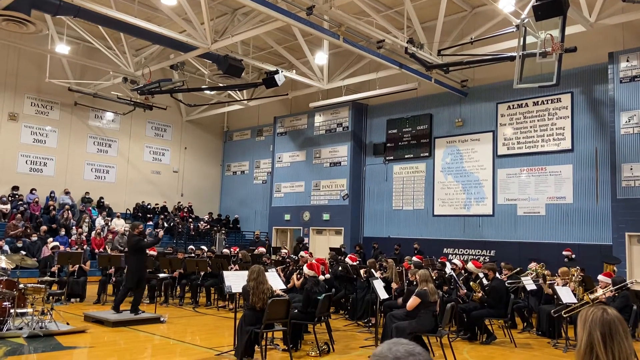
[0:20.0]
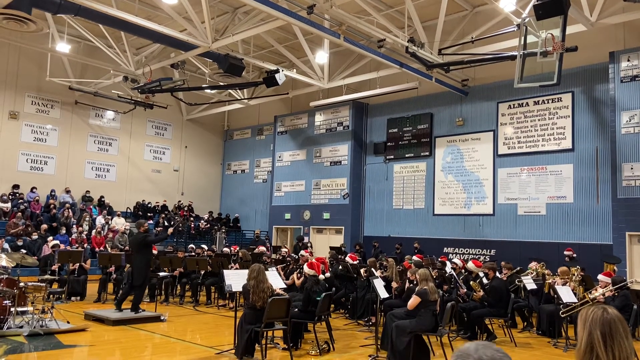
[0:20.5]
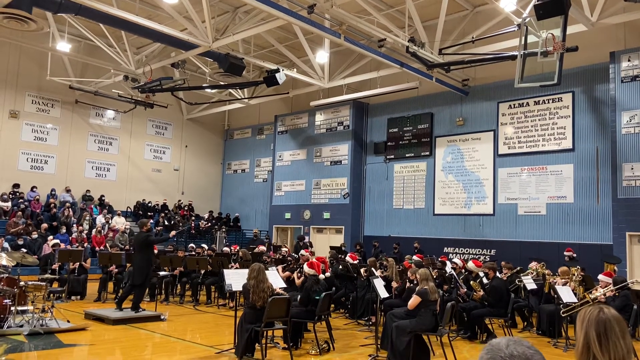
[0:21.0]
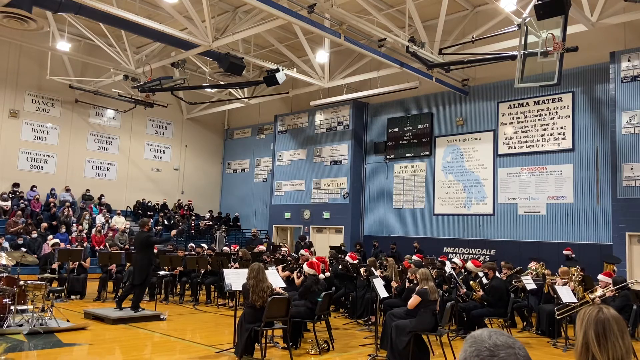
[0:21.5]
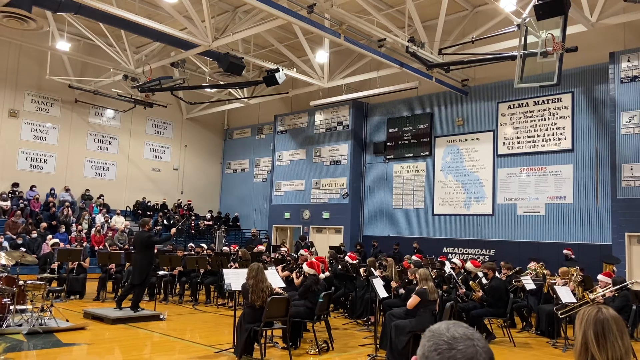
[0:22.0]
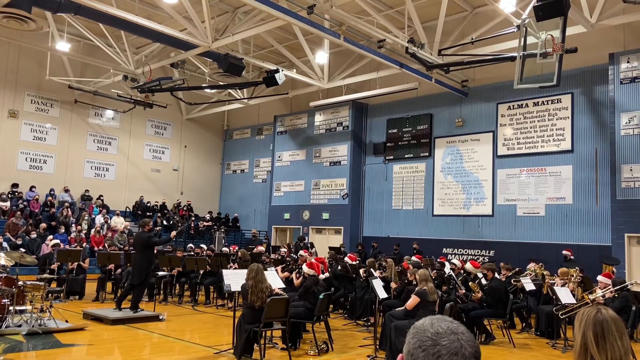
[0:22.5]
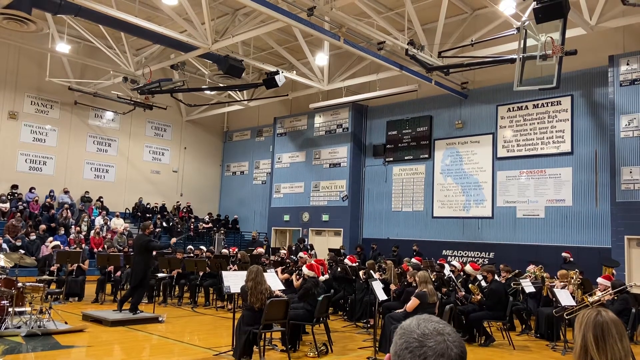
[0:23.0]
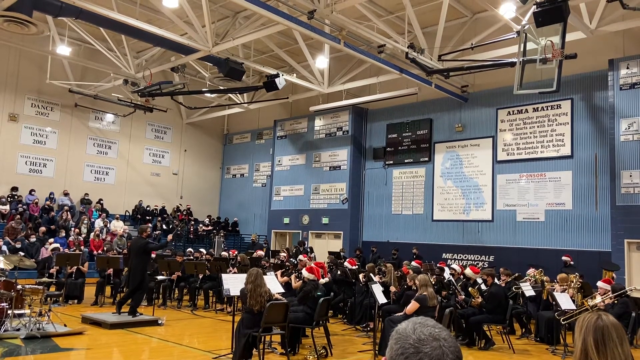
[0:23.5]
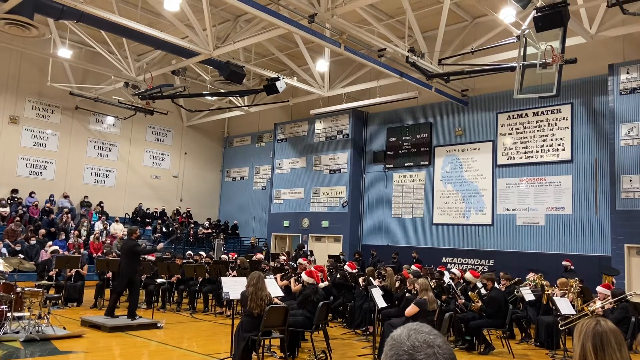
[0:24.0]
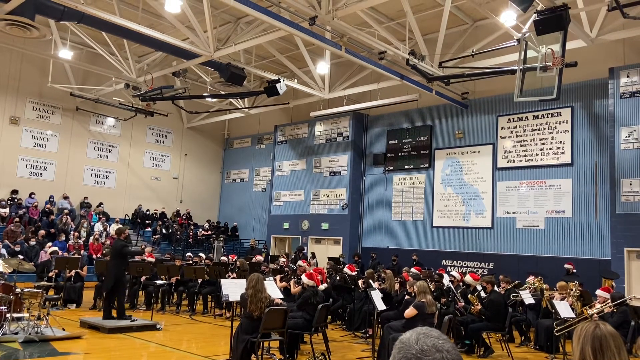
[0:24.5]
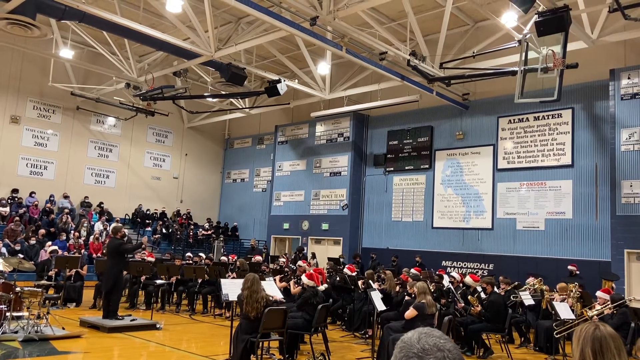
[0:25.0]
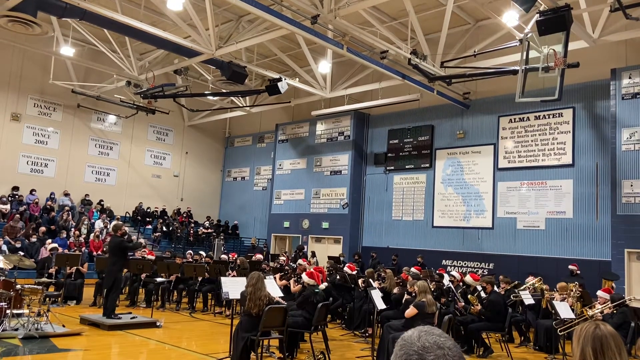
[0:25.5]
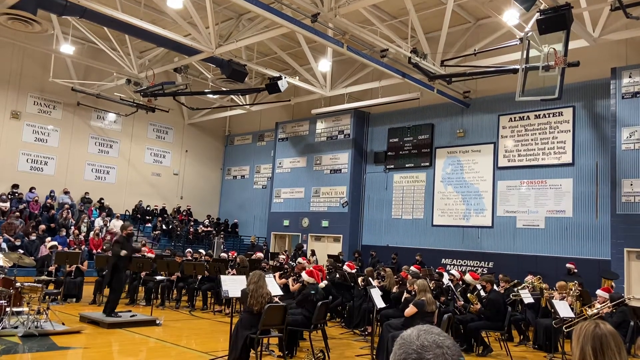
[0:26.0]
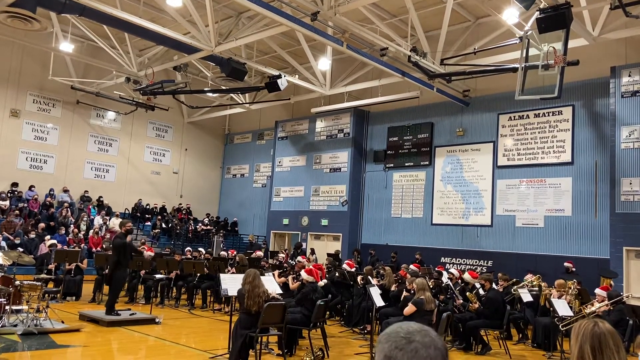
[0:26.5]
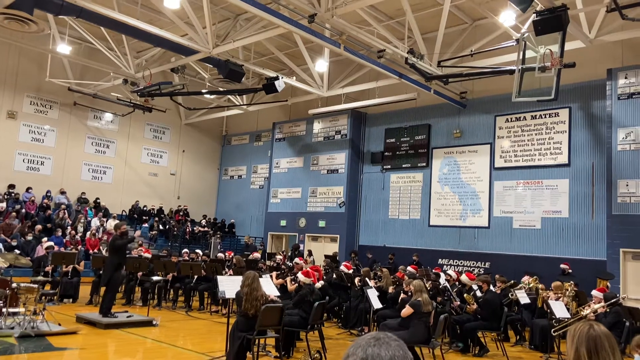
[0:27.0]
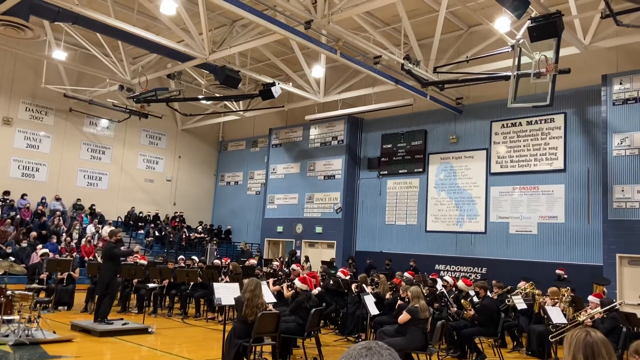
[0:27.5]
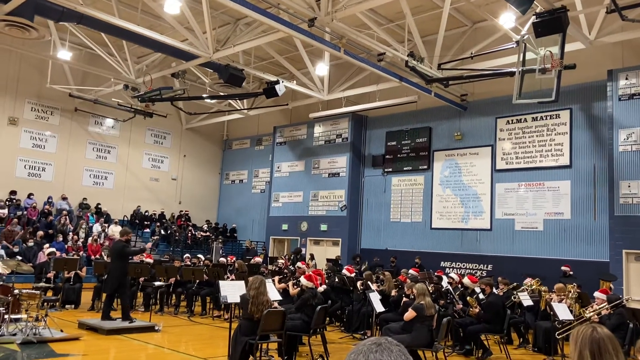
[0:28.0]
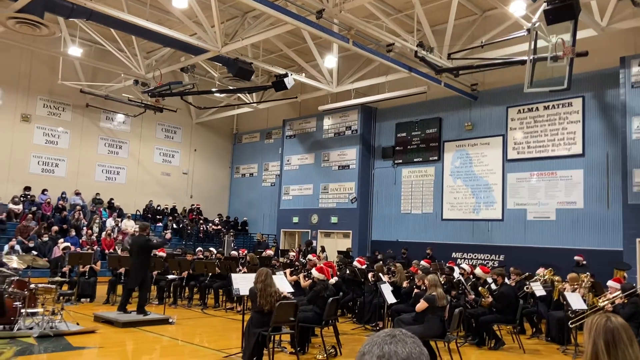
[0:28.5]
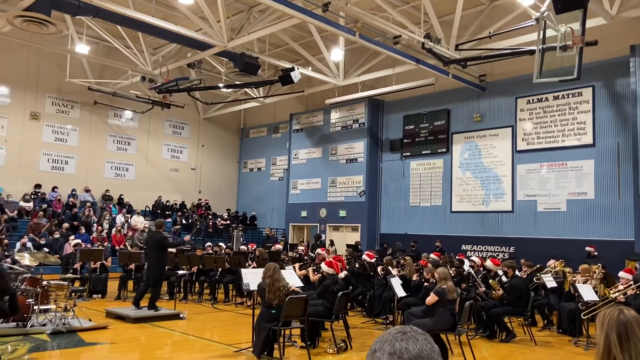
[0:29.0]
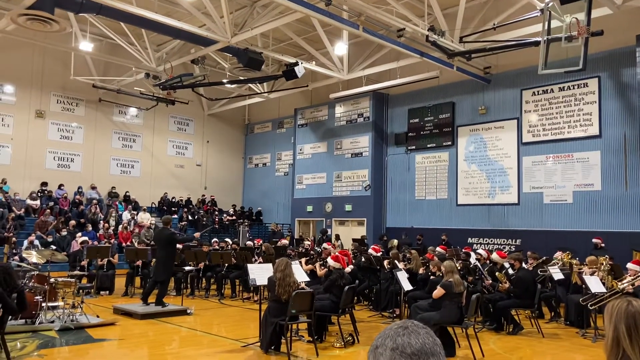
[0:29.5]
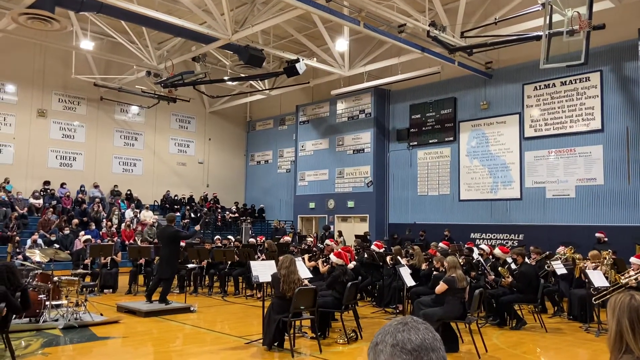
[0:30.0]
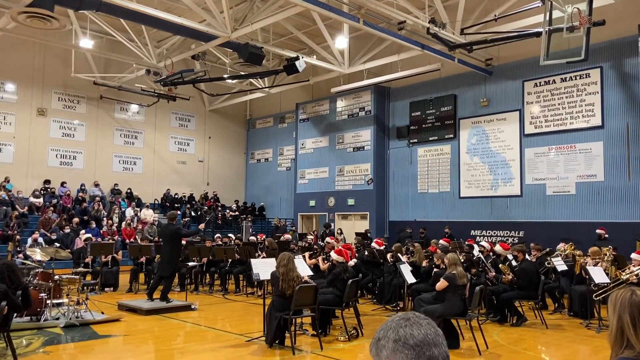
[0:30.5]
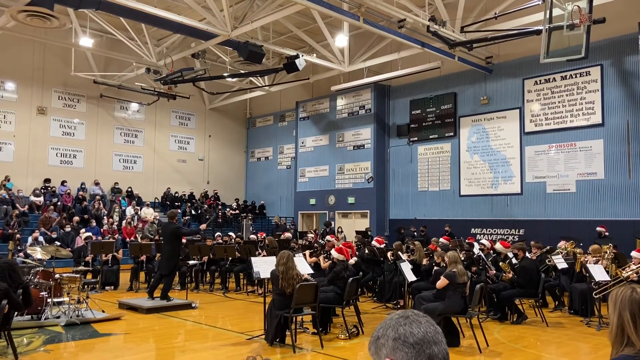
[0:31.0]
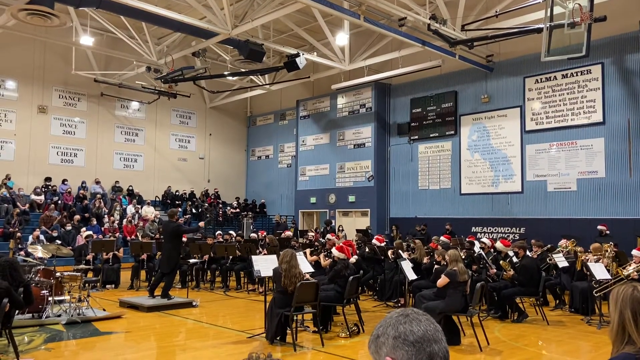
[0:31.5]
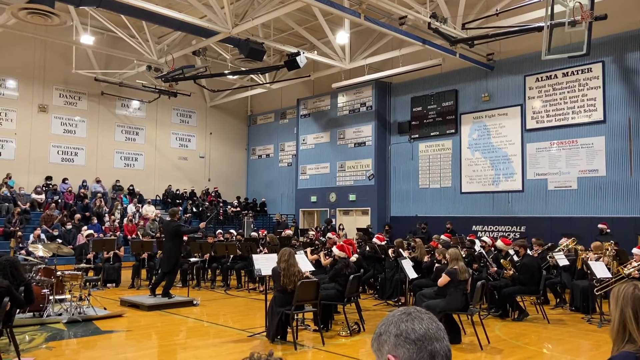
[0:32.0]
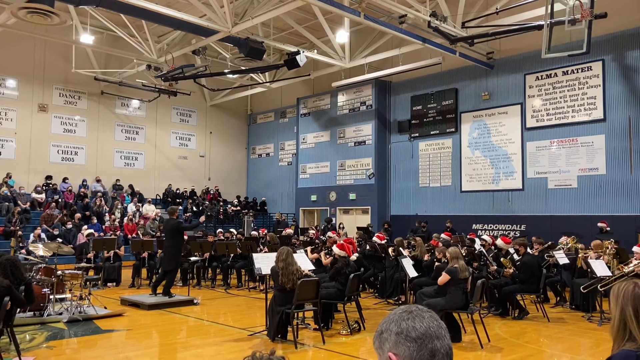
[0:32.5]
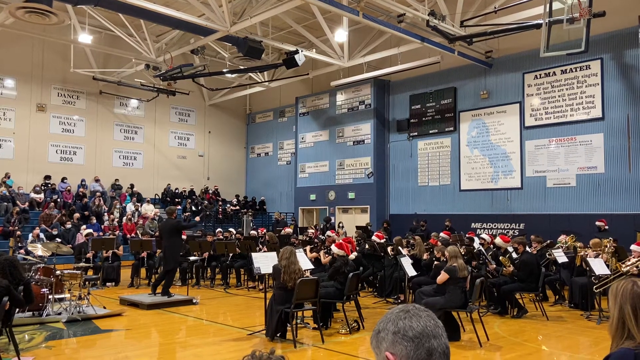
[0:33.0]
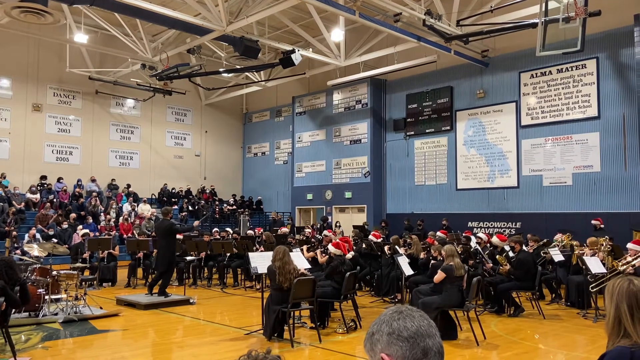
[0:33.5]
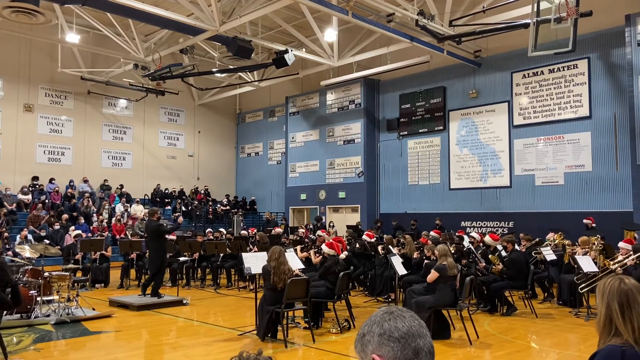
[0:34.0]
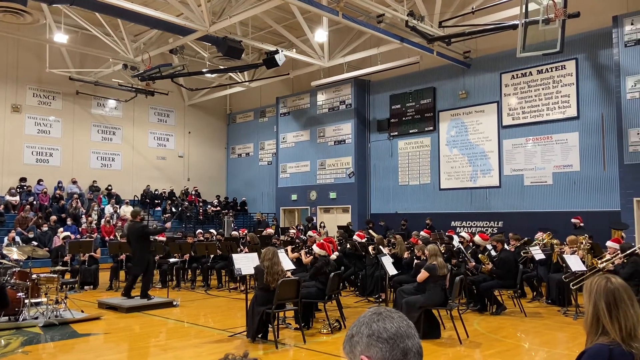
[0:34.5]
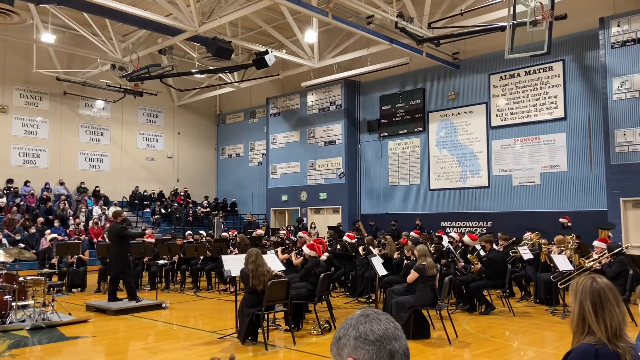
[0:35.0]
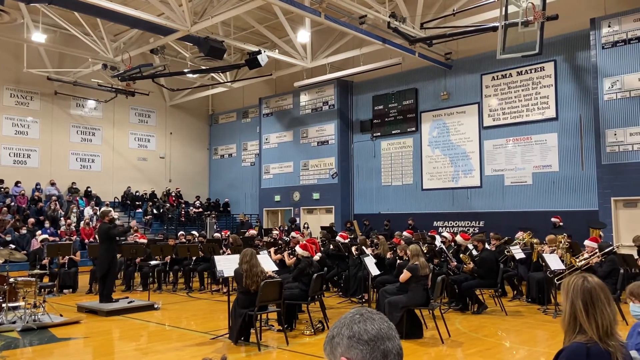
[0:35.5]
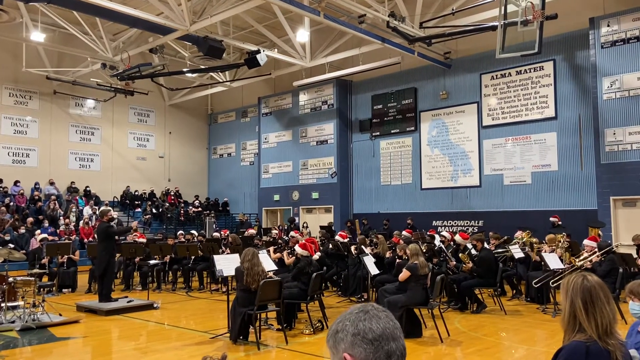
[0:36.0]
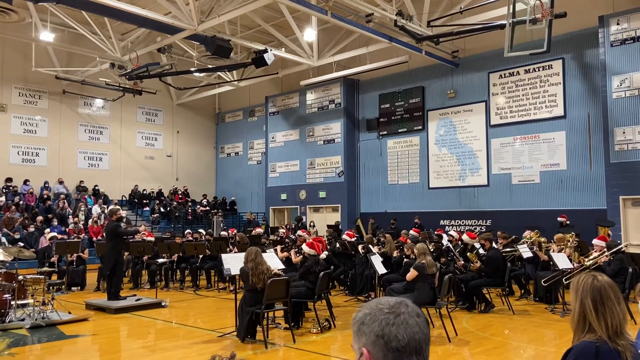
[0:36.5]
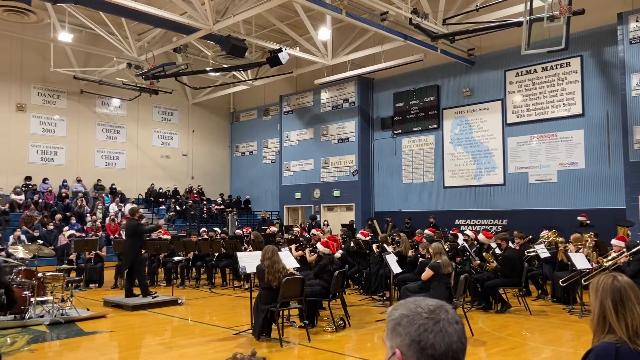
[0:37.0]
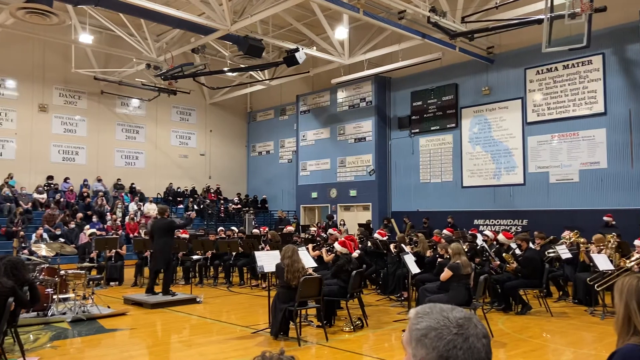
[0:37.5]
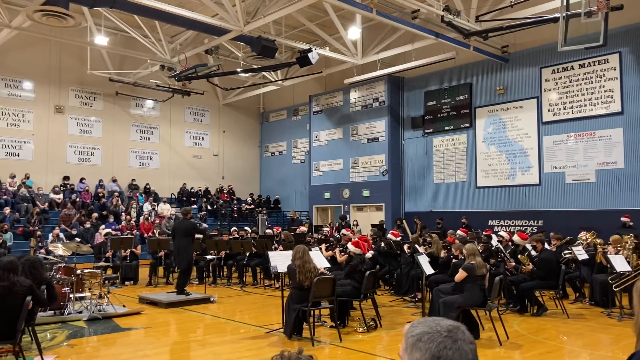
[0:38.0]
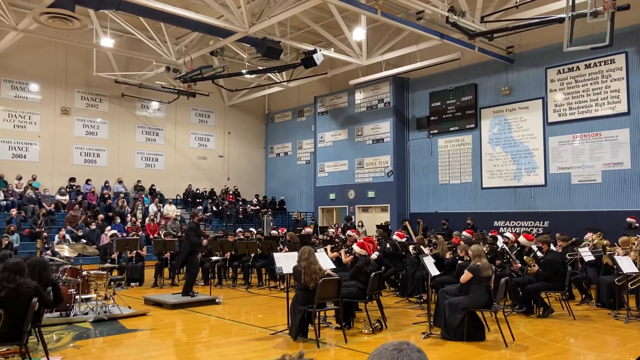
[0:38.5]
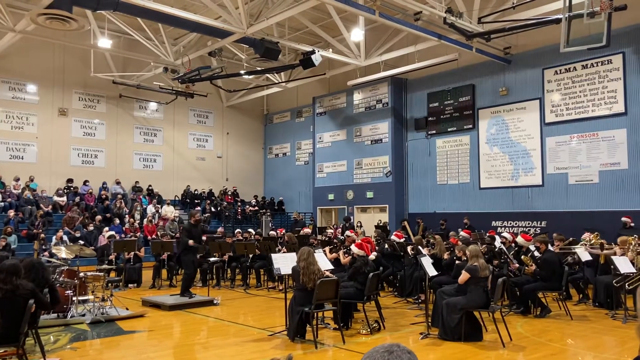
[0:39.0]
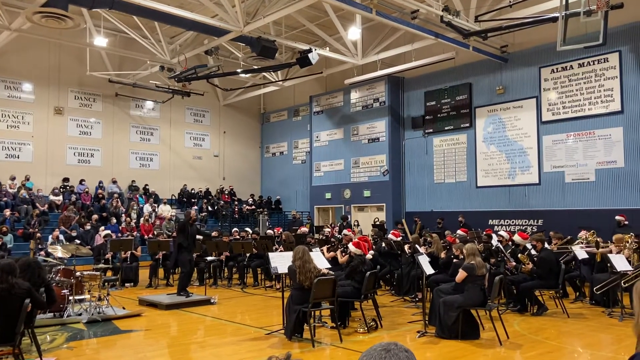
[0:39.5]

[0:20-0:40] The scene is still in the gymnasium. At the top of the screen, the basketball nets appear to have been put up out of the way. The bleachers on the left are filled with what could be students, with a white wall above them, and the wall to the side at the front is a light blue-grayish color with signs all over it. On the shiny gym floor, many people sit in black chairs, all wearing black and holding musical instruments, and some wear red and white Santa hats. In front of them, a conductor stands on a tiny square stage with a small stick in his hand, moving his arms back and forth. At the bottom right, the tops of people's heads are visible; they appear to be audience members sitting to watch the show.